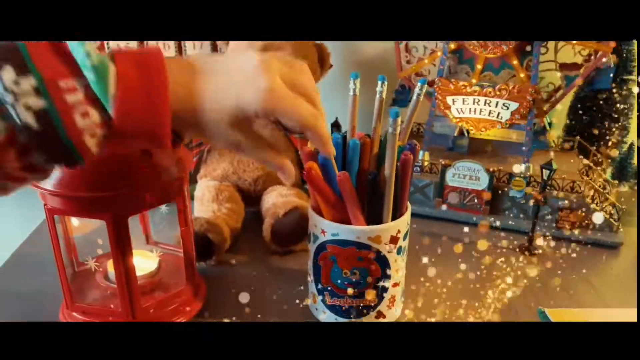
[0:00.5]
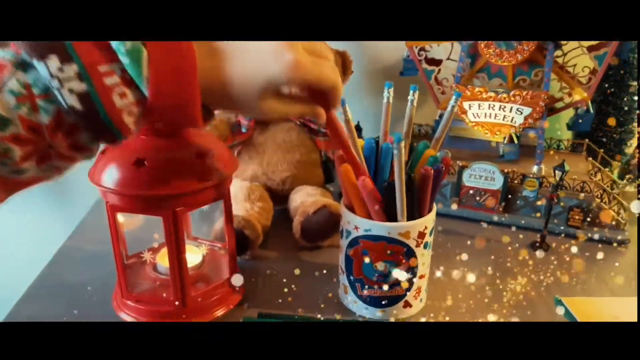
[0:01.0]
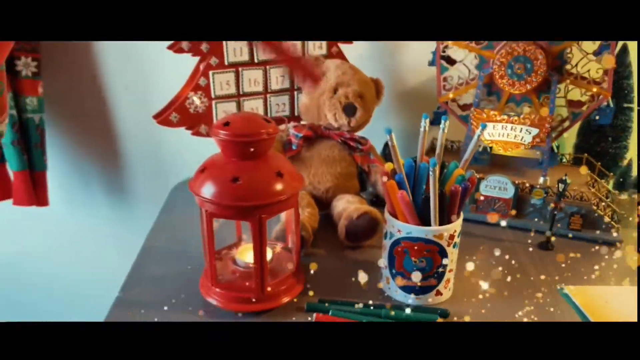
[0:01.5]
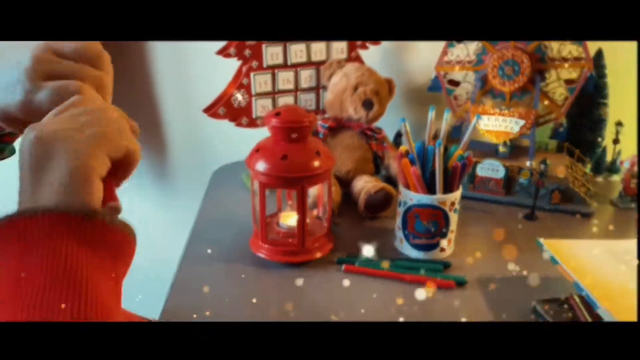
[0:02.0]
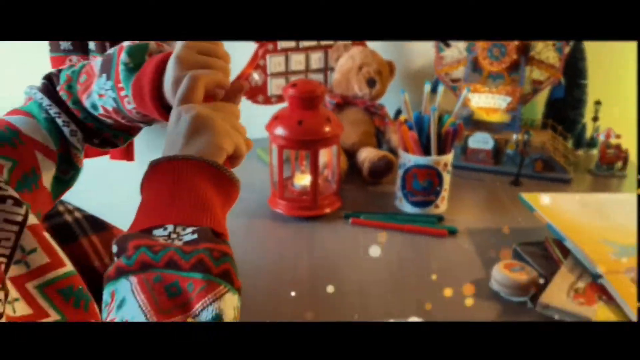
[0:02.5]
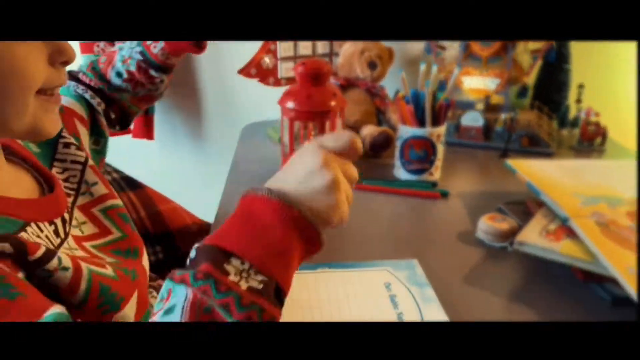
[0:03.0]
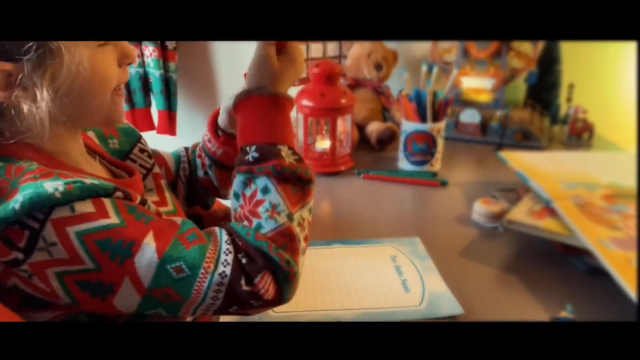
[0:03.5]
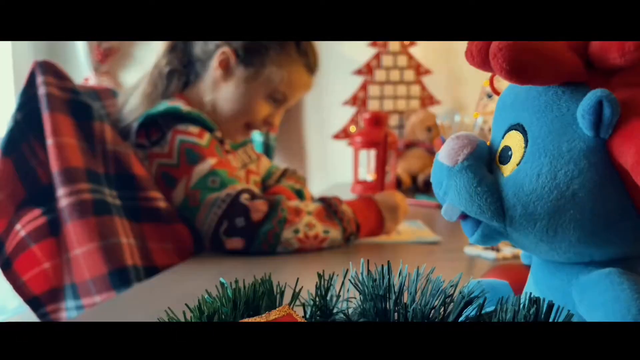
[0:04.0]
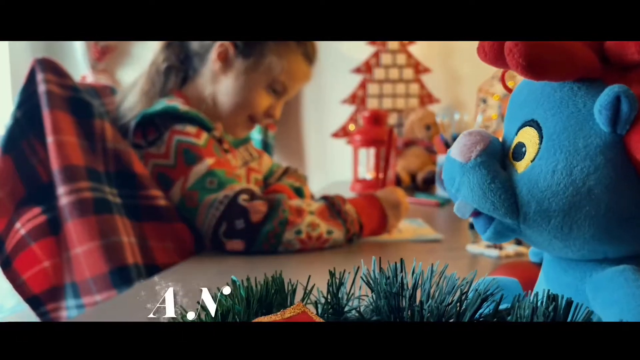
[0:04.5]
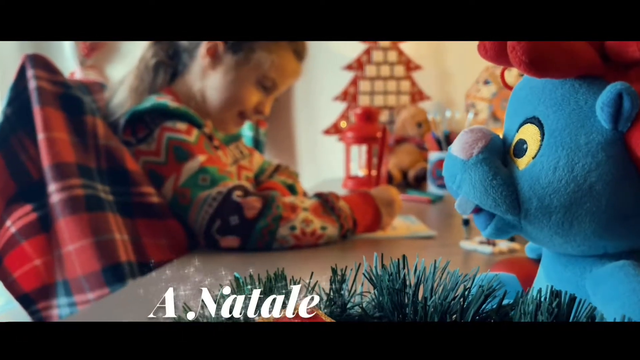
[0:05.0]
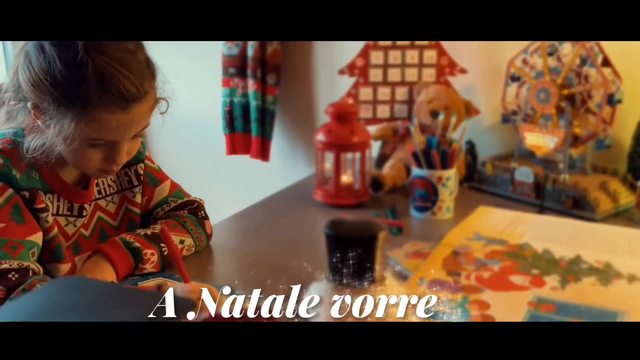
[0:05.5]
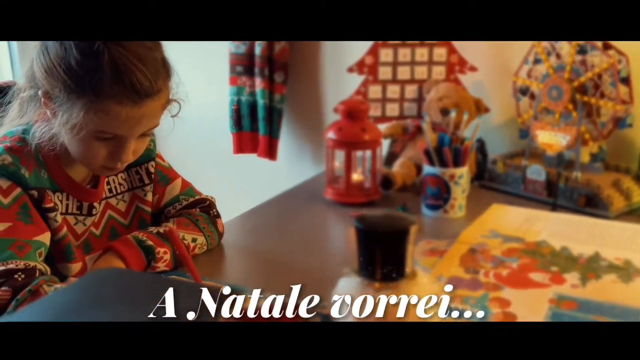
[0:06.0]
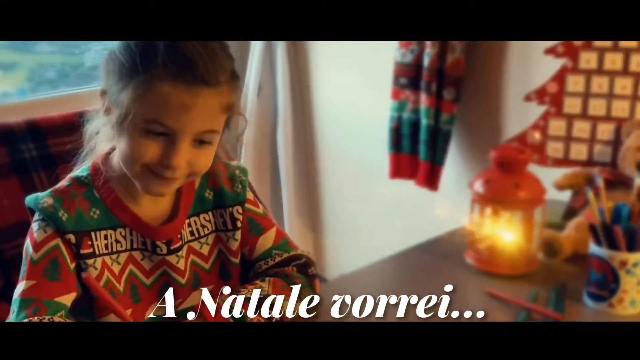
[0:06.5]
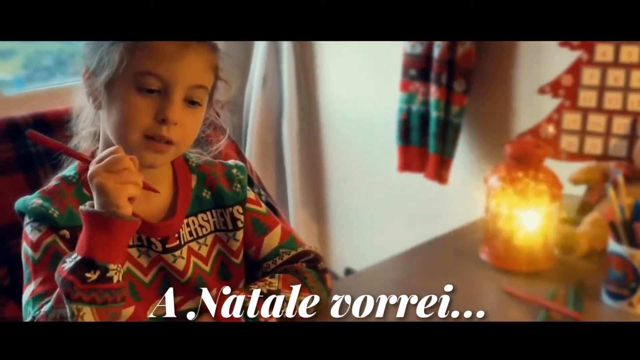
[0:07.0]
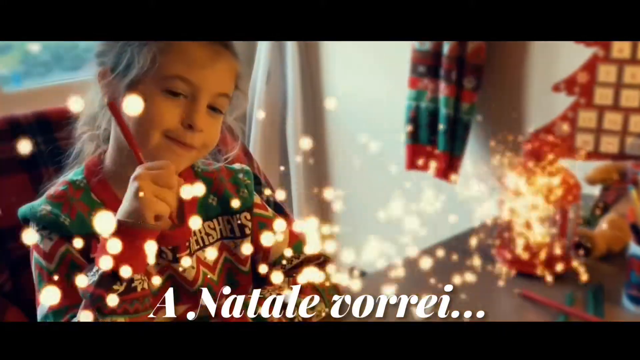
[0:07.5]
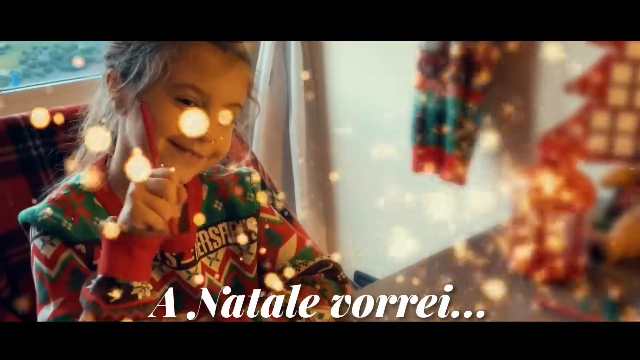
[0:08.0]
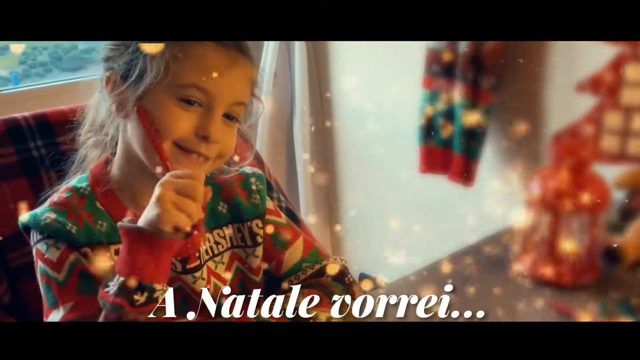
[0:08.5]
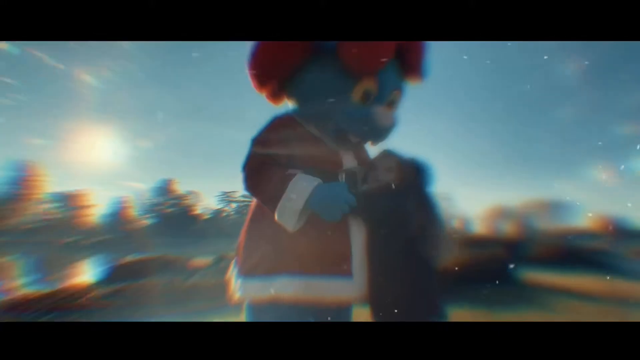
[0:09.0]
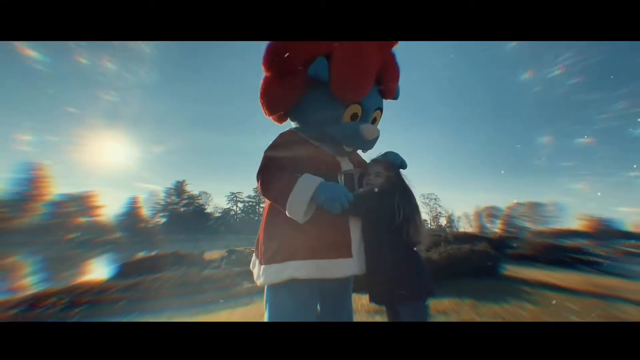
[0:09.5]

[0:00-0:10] A little girl picks up a marker. It is probably Christmas time. She is coloring, seemingly in coloring books, with her markers. On her desk there is a little Christmas tree, a little merry-go-round, a little bear, and markers and cups. She wears an ugly Christmas sweater sponsored by Hershey's, and she appears to be European. She is thinking, and then light shoots out. She hugs a Smurf or Smurf-like character.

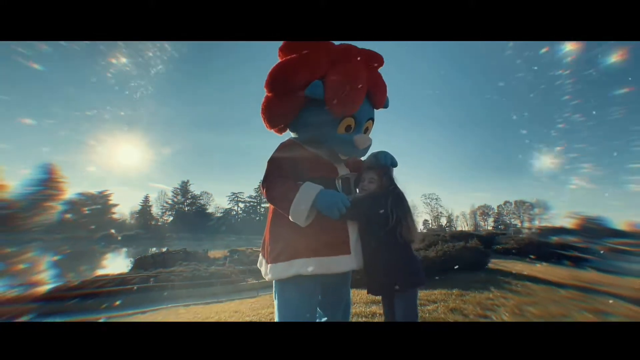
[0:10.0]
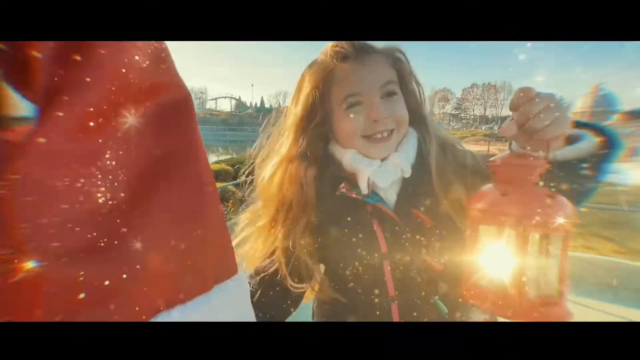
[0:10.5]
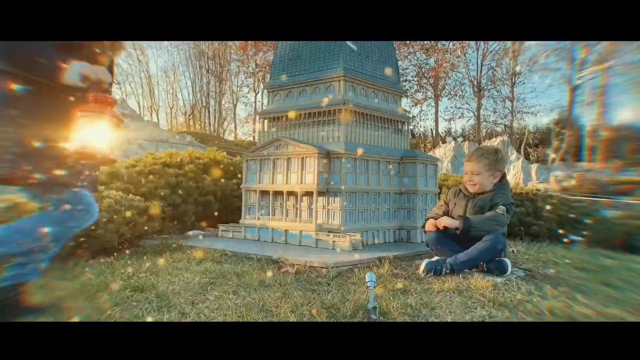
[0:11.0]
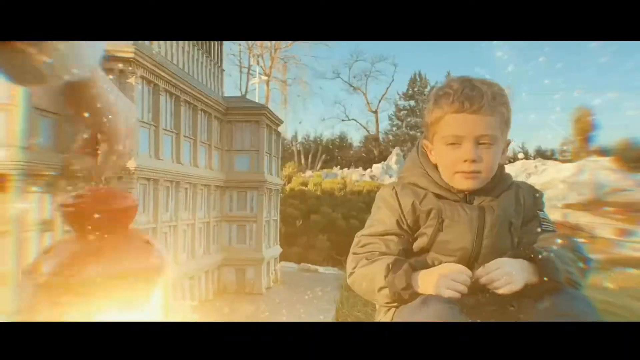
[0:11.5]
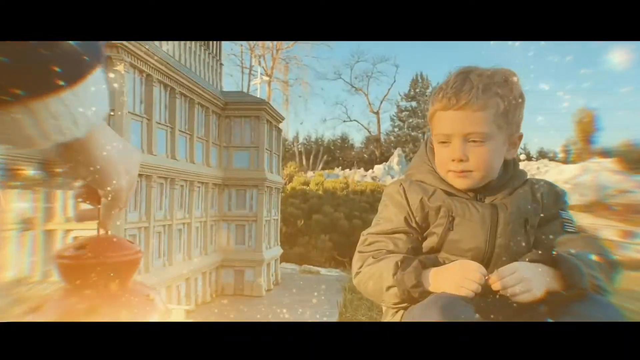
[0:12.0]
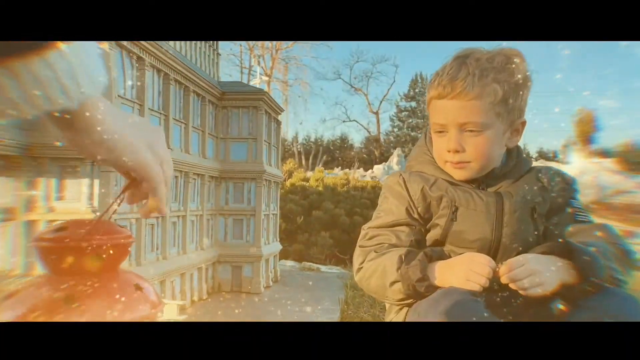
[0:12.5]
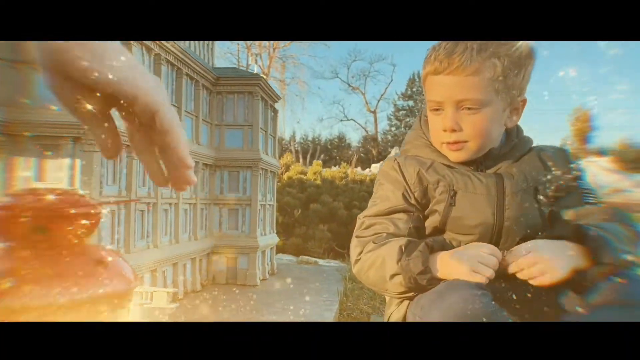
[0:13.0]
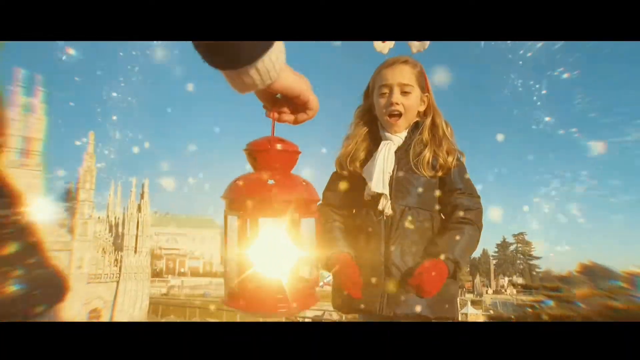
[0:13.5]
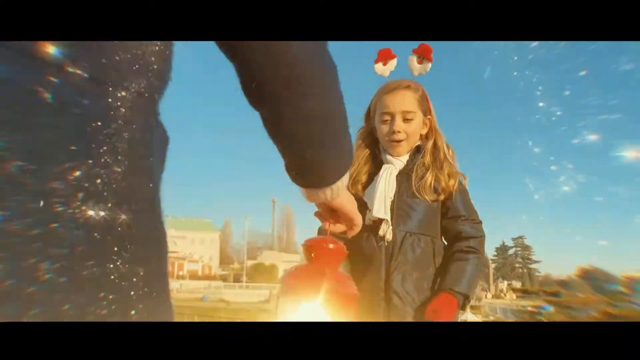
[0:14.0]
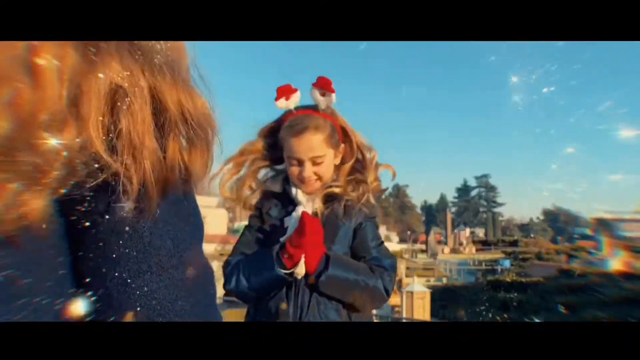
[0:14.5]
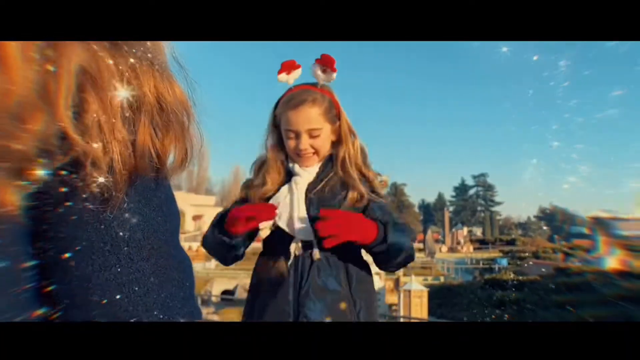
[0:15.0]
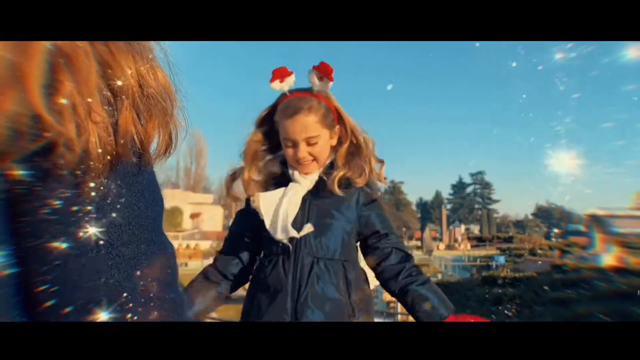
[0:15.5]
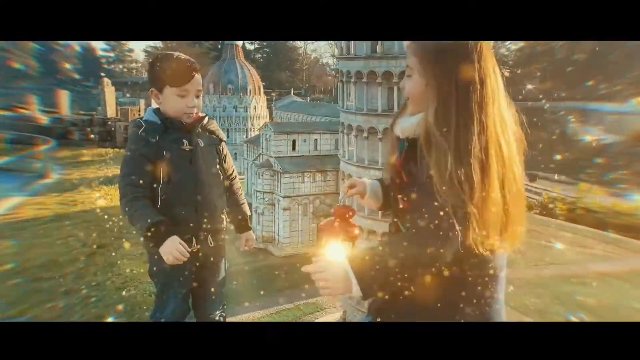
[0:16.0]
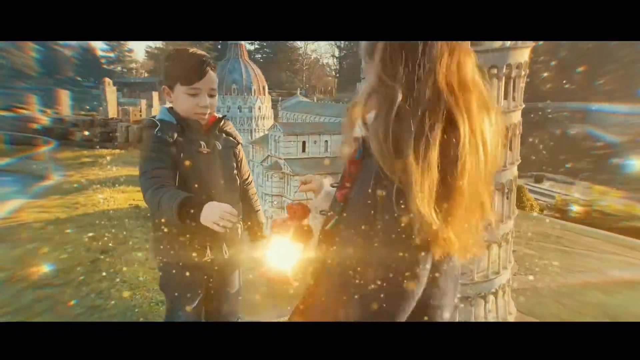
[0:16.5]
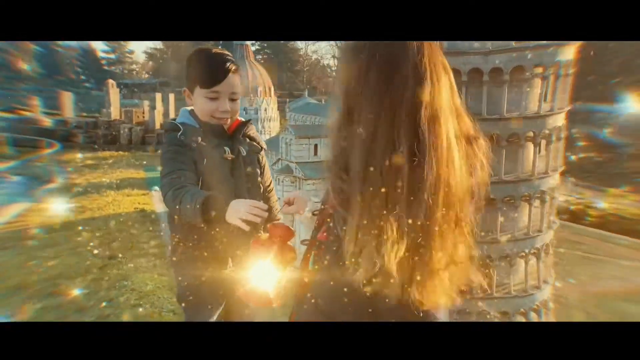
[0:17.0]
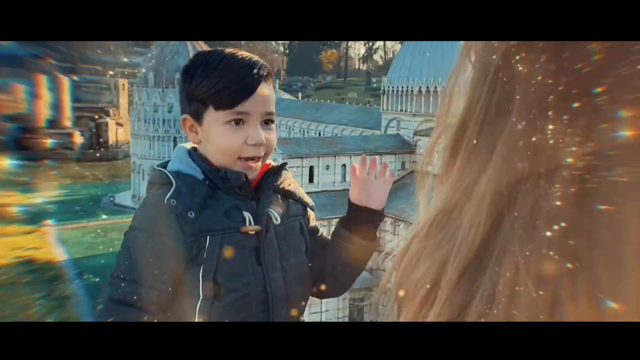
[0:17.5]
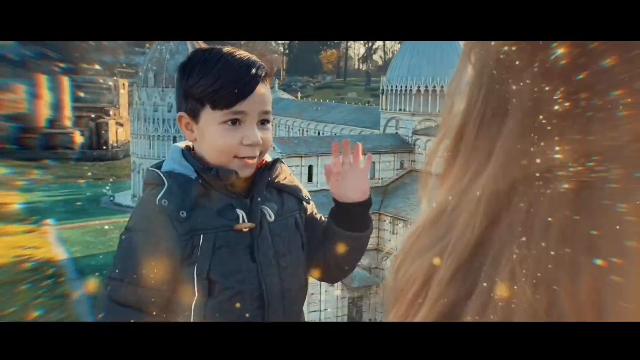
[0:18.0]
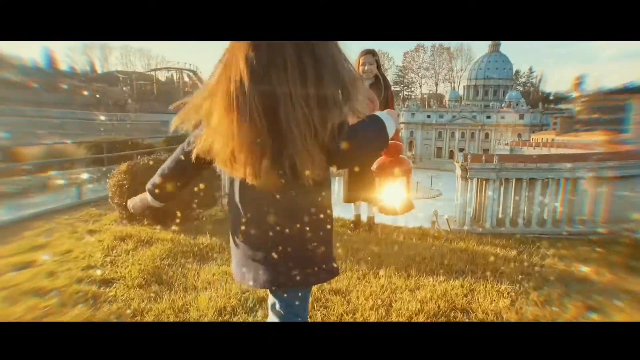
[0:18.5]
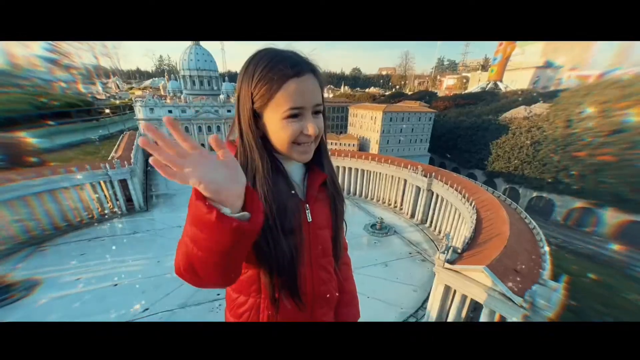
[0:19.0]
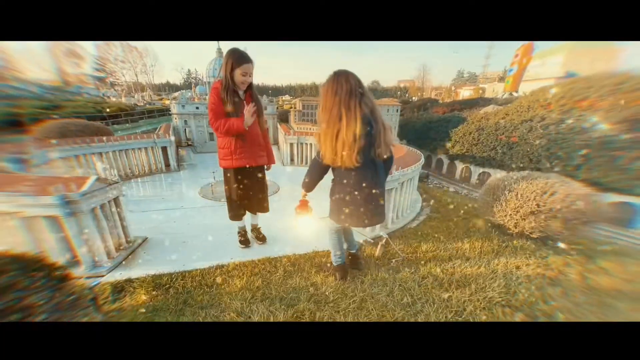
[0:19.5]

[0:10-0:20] Some Korean text appears. The girl holds a light and holds the Smurf's hand. She is next to a big toy building. The same lantern emits light all over. It seems to be an advertisement, and it looks magical. The girl jumps. She visits other little kids who are also in toy mansions and passes the lantern to each of them, and all the kids wave to her.